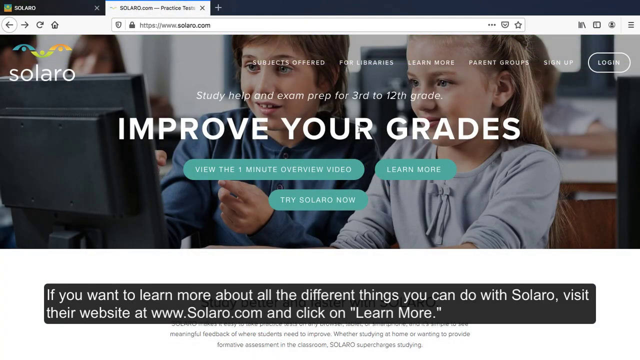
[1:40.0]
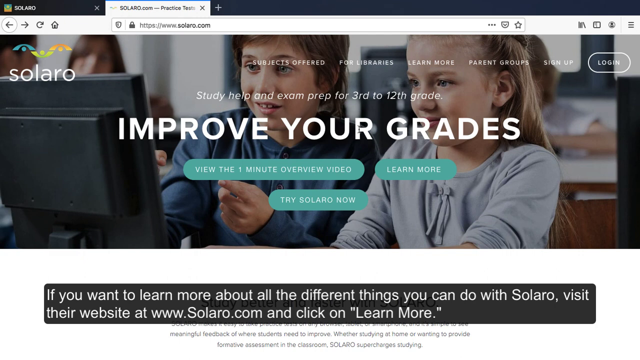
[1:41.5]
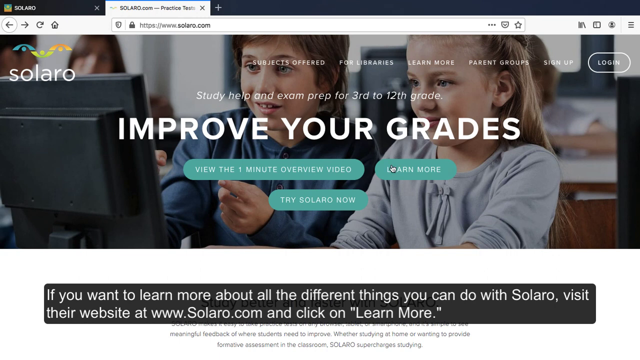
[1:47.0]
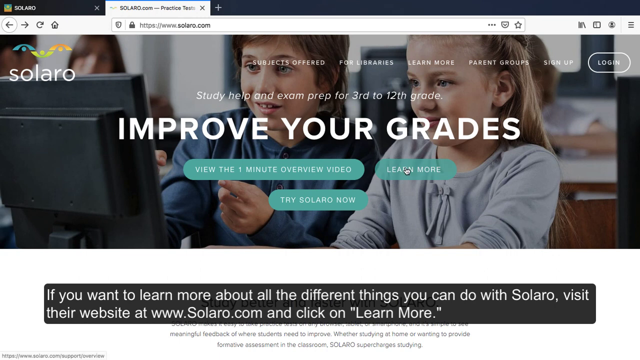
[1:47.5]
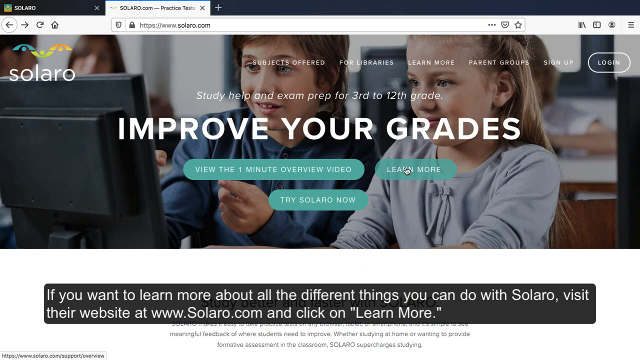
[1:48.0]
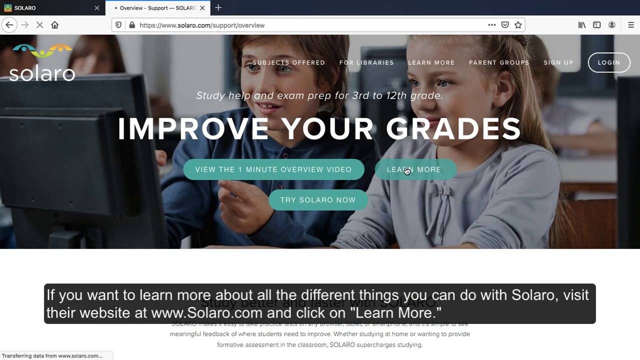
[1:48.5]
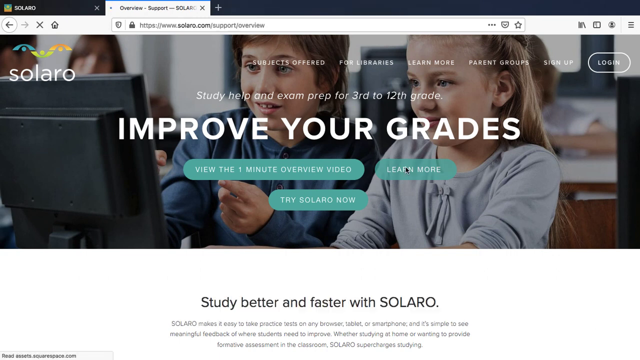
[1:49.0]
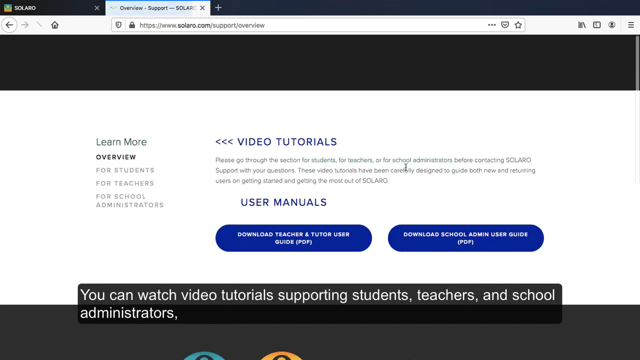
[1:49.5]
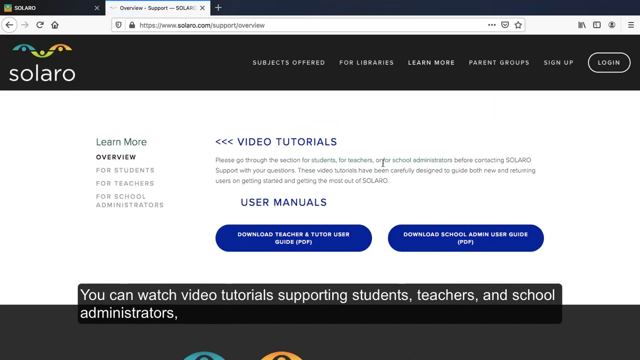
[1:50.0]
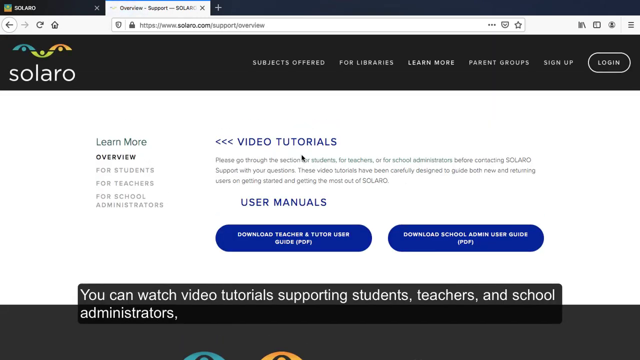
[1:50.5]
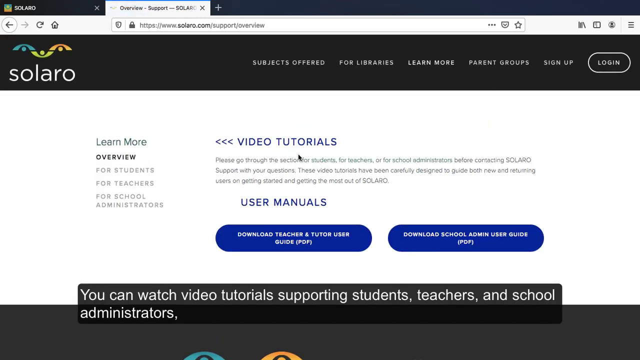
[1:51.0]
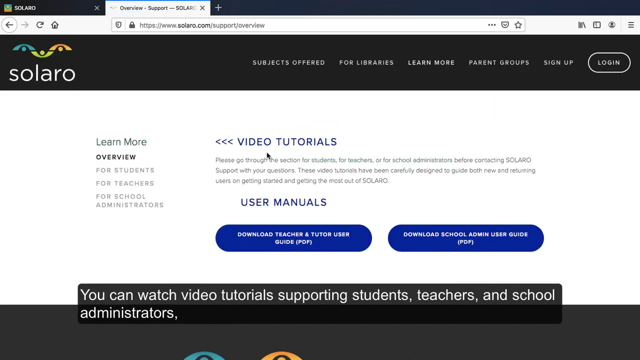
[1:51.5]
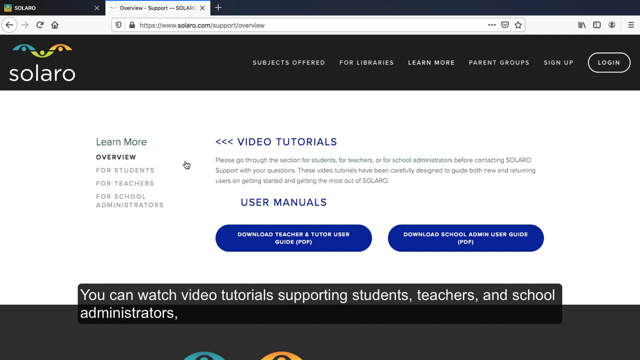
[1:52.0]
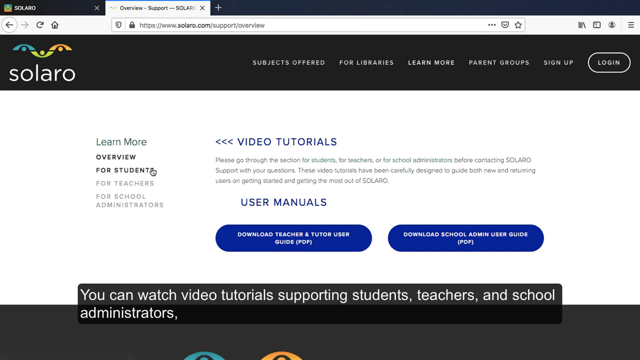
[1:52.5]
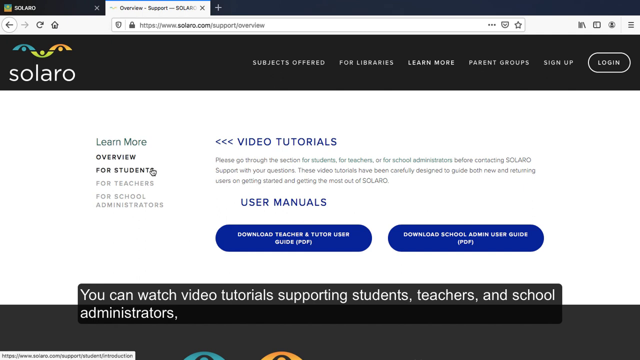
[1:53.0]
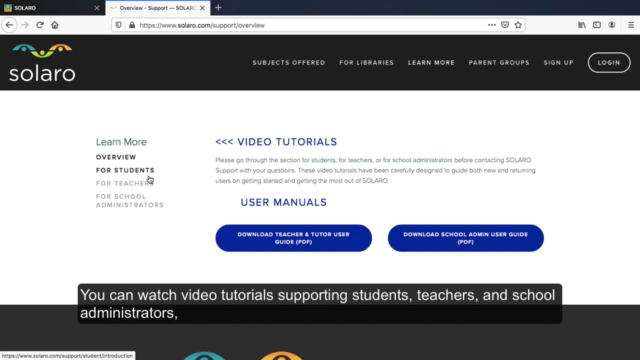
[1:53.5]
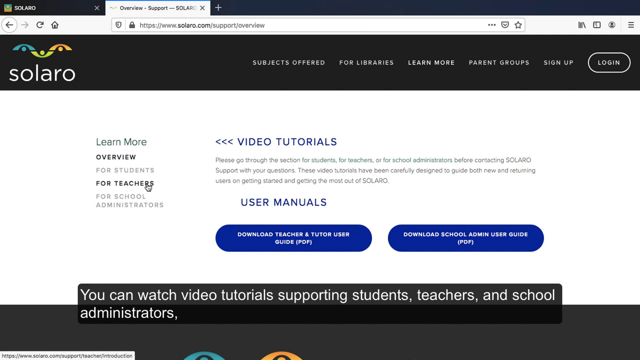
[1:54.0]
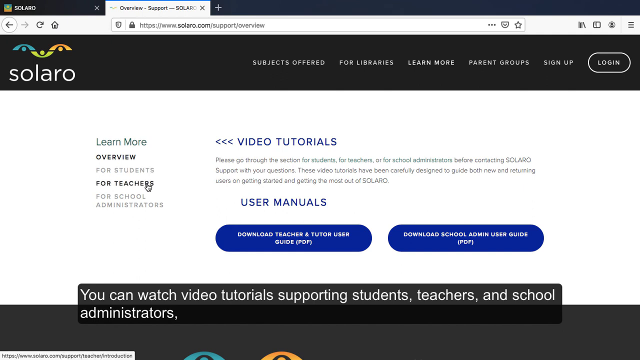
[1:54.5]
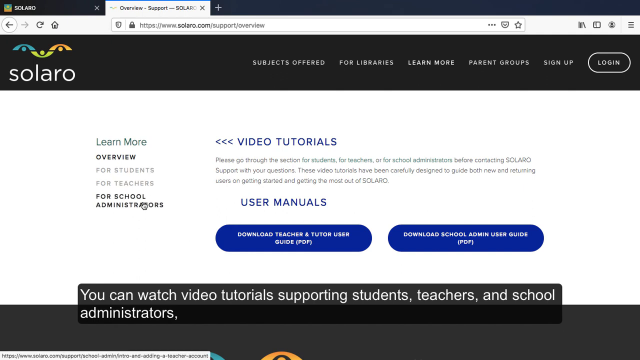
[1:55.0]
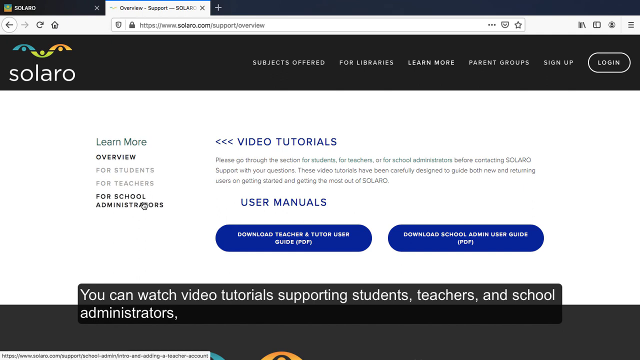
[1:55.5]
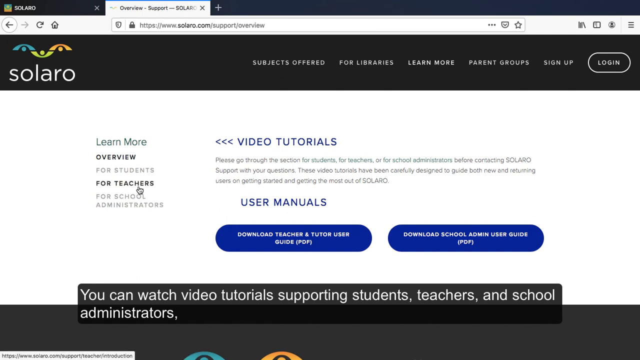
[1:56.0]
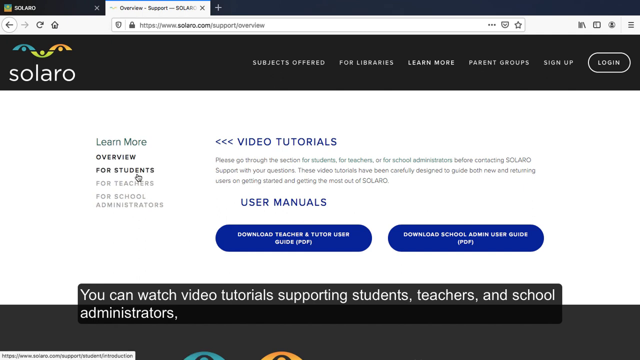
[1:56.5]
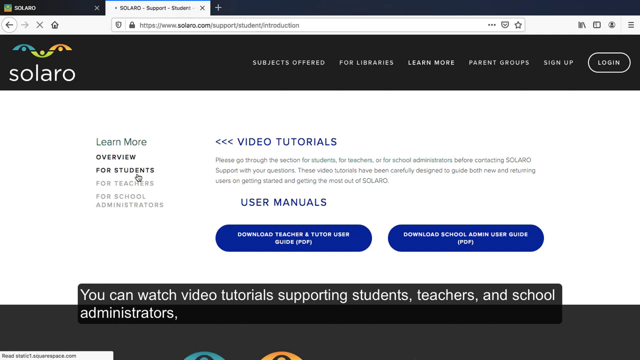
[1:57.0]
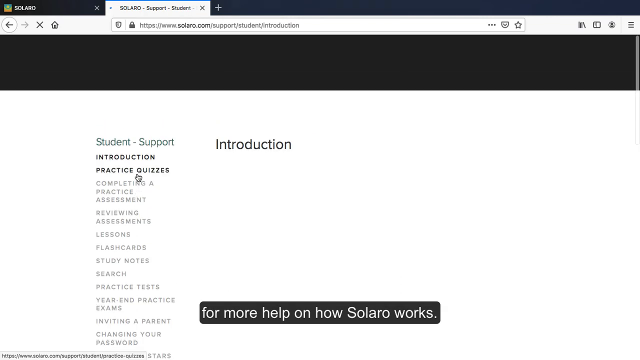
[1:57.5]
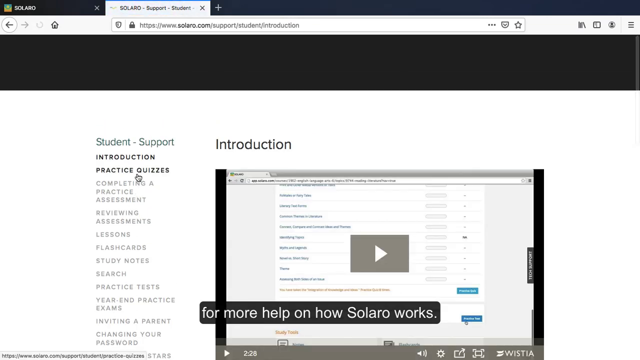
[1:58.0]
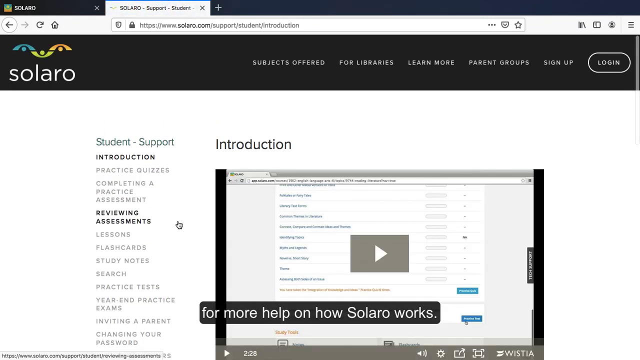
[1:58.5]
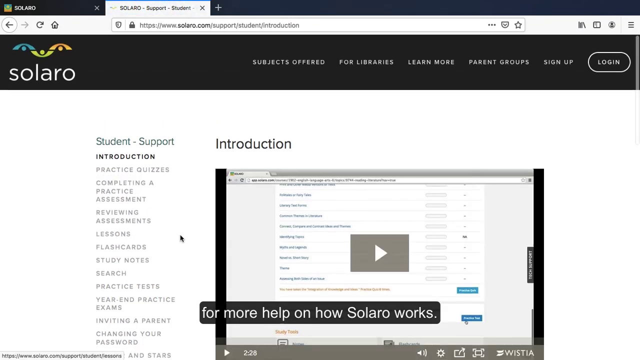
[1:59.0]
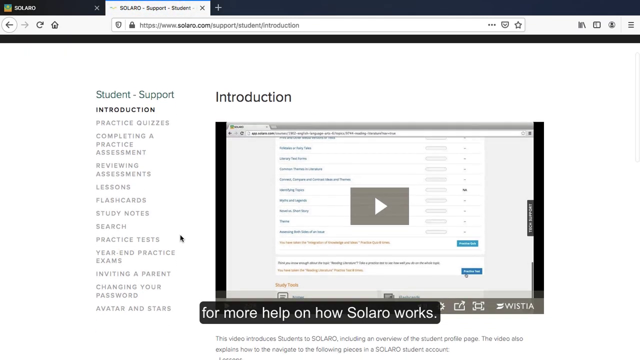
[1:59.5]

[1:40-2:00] The two children continue to appear: the boy in a blue shirt with kind of short hair, and the girl in a gray shirt with kind of dirtyish blonde hair. The video then switches to a Solero video tutorial screen with user manual buttons, including "download school admin user guide" and a teacher or tutor user guide button, on kind of blue backgrounds. A header reads "subjects offered for libraries learn more parent groups sign up log in", and a learn more sidebar lists "overview", "for students", "teachers" and "for school administrations". The cursor hovers over the for students section and then clicks into the student support section, which shows a kind of YouTube video on the page along with more information about Solero student support on the Solero website.